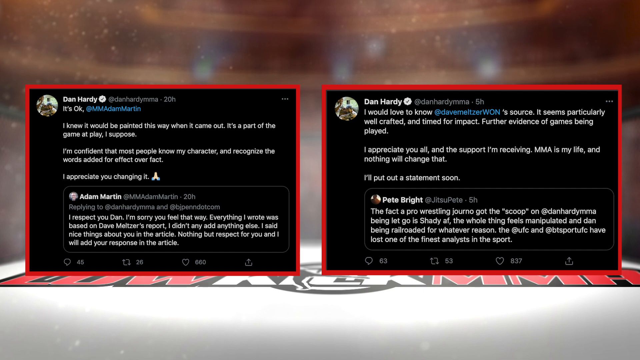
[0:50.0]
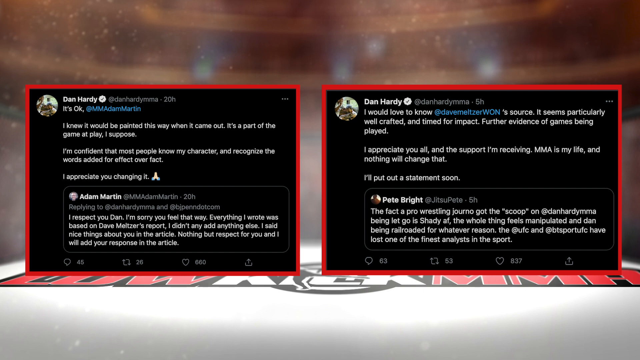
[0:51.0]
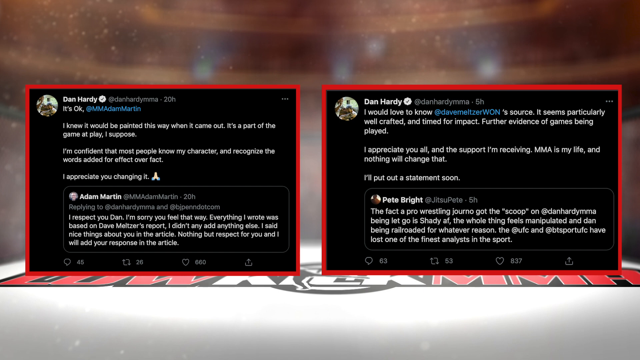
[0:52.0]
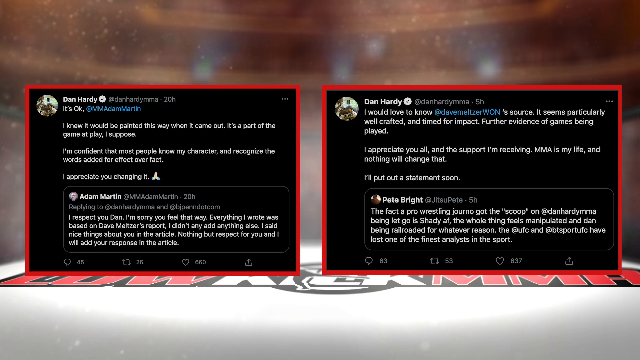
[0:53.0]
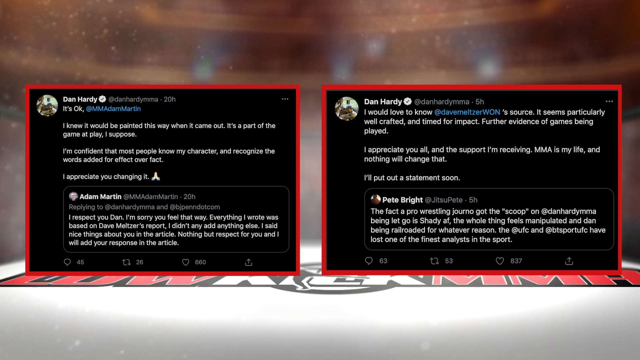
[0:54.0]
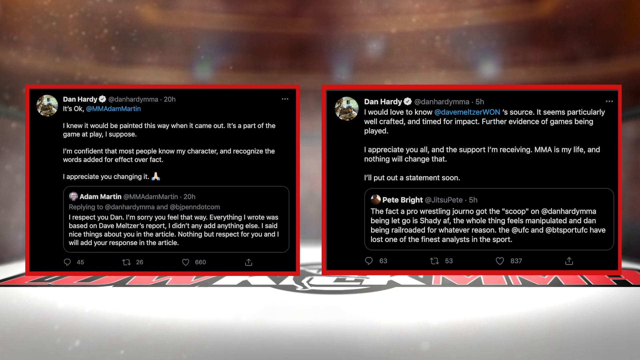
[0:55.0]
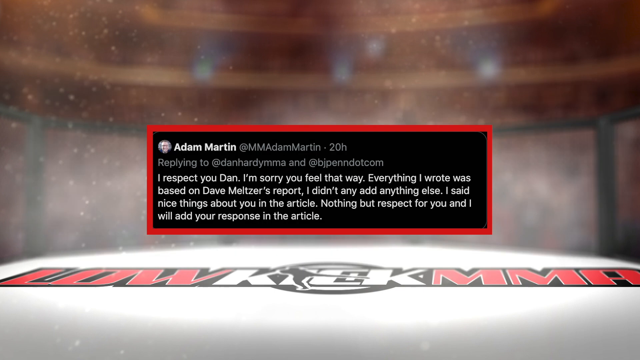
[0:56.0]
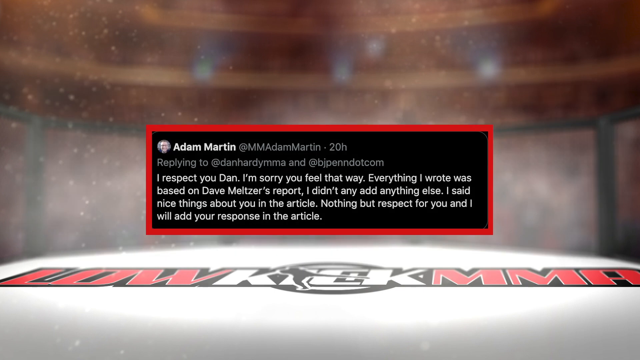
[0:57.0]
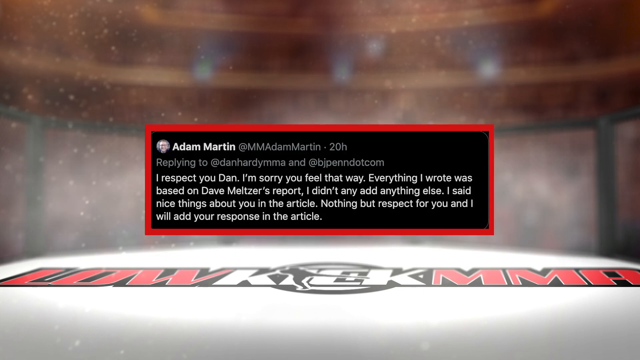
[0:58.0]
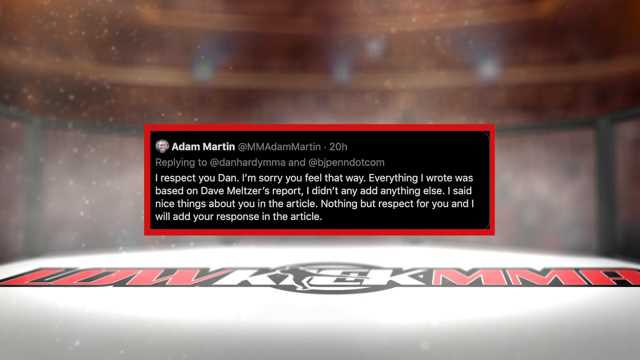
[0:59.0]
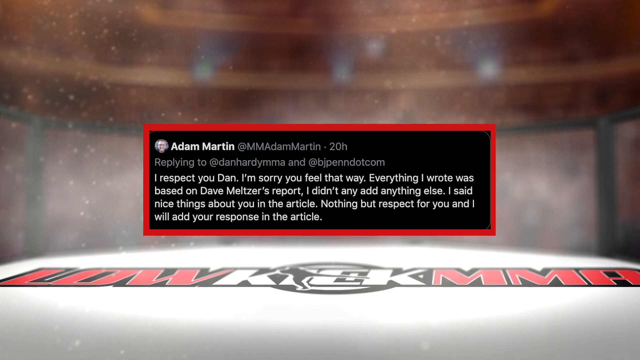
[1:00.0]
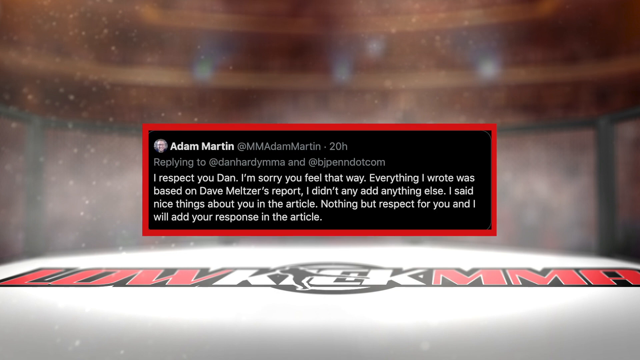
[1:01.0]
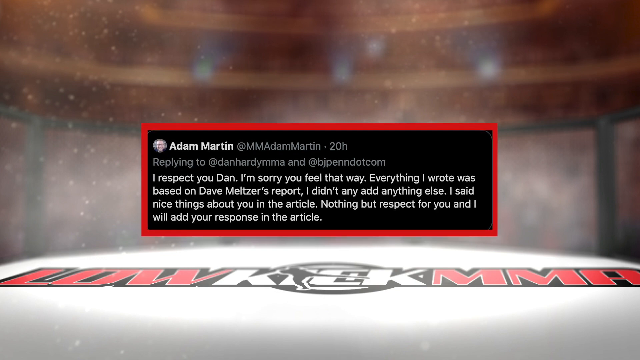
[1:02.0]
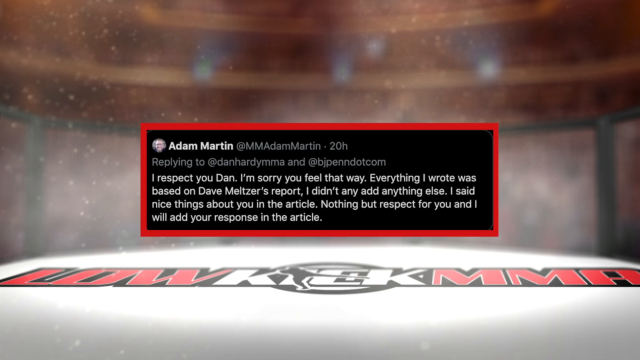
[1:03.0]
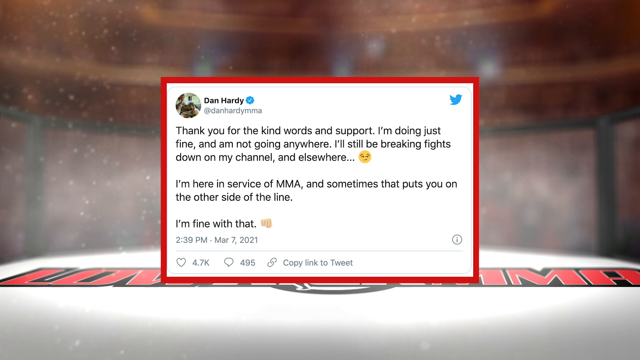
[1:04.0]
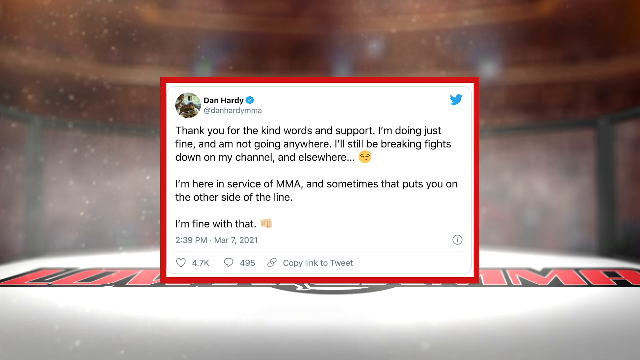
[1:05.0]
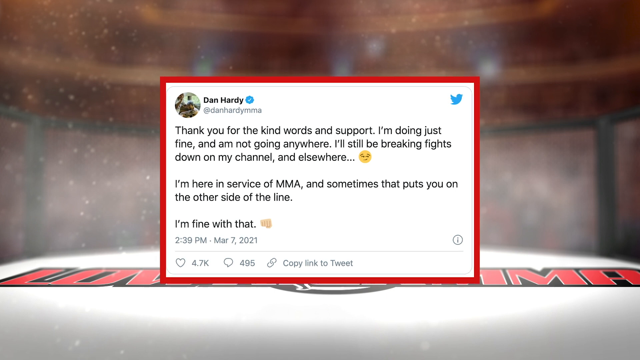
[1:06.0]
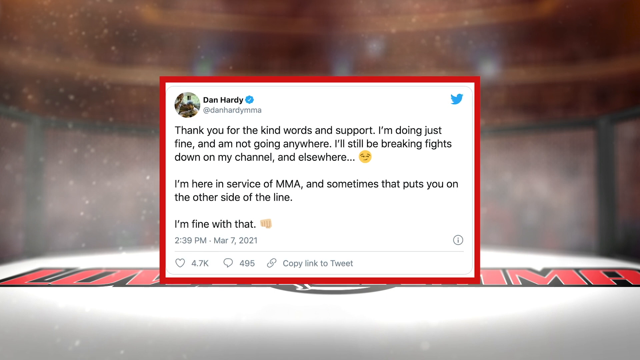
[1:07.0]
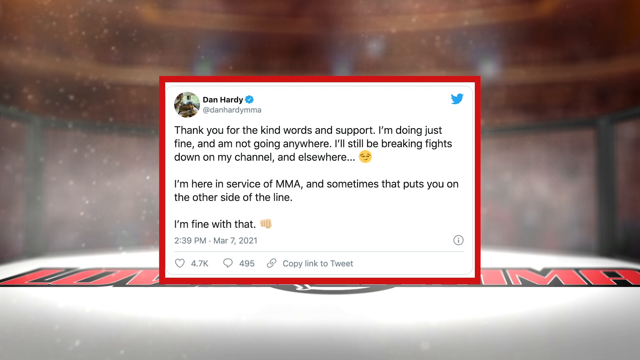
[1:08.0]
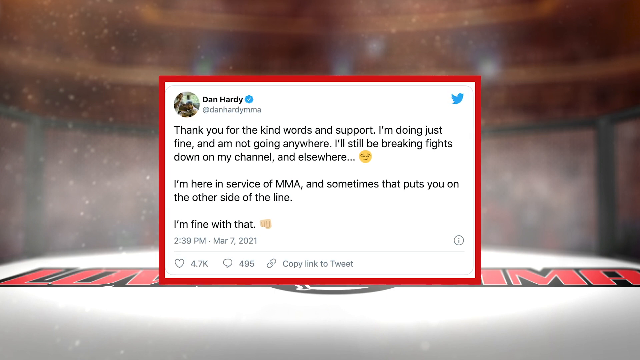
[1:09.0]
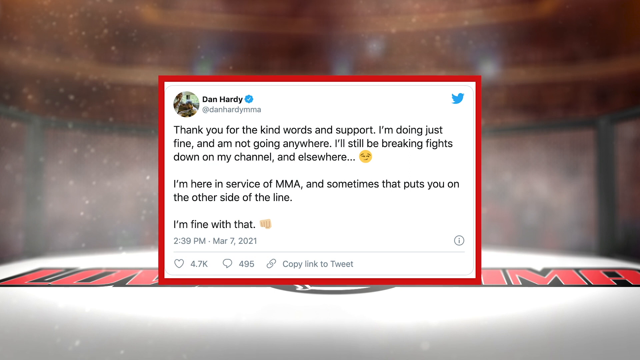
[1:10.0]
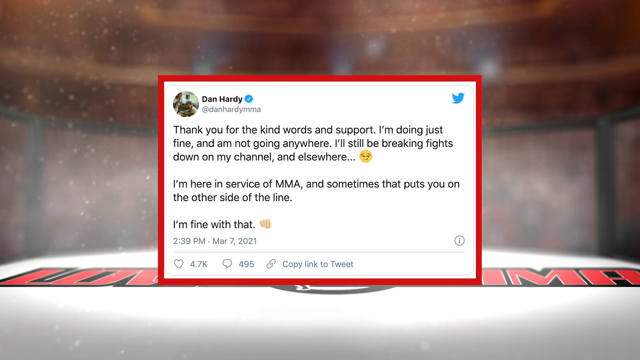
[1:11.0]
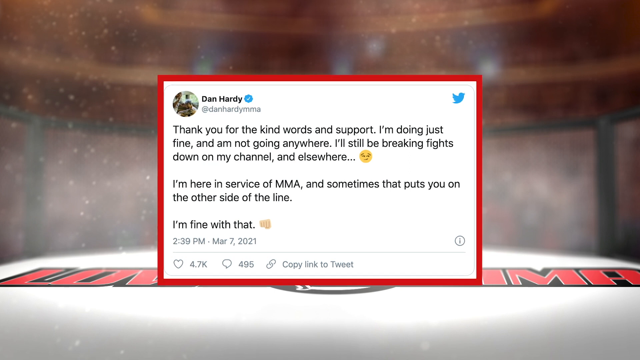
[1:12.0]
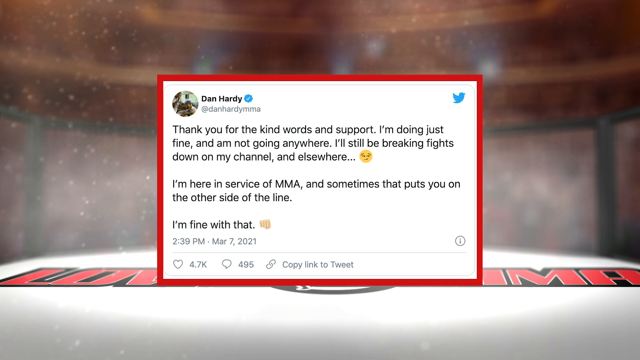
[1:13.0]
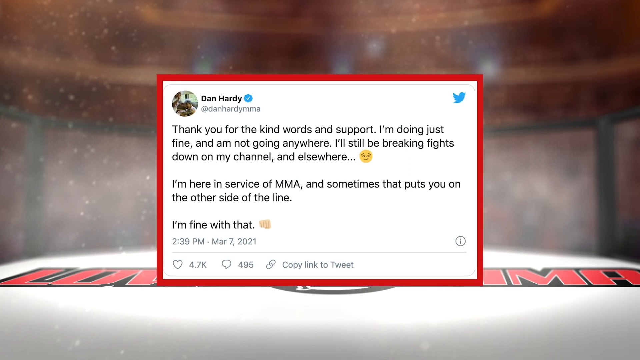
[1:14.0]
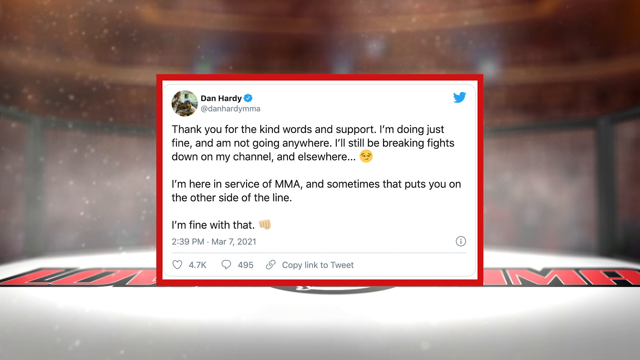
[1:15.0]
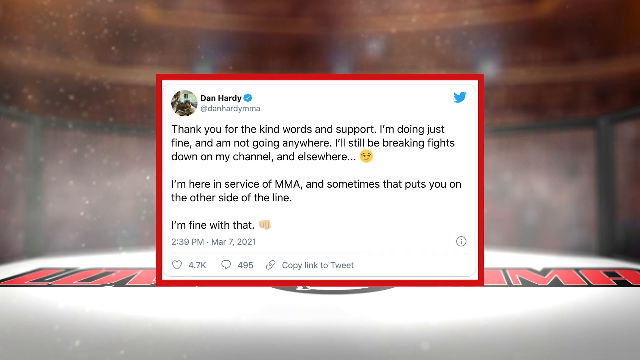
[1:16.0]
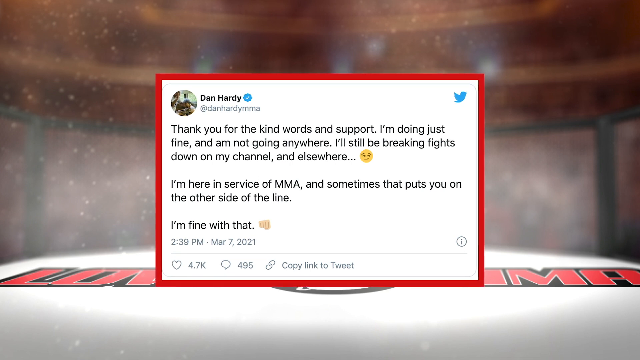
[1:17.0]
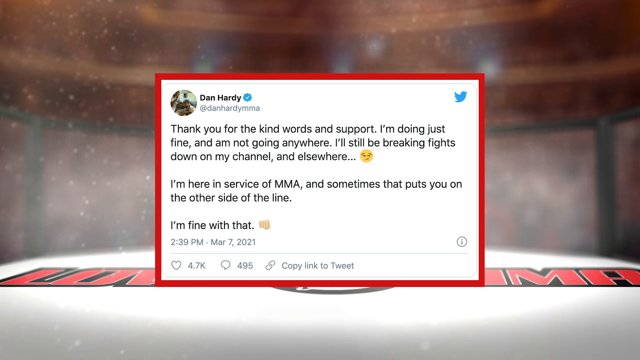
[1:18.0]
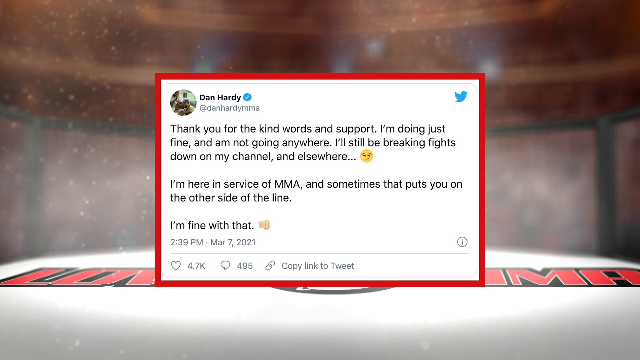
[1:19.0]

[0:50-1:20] Two tweets by Dan Hardy are on screen. The first says "I knew I would be painted this way when it came out. It's a part of the game at play, I suppose. I'm confident that most people know my character and recognize the words added for effect over fact. I appreciate you changing it." The second says "I would love to know where Dave Meltzer got his source. It seems particularly well crafted and timed for impact. Further evidence of games being played. I appreciate you all and the support I'm receiving. MMA is my life and nothing will change that. I'll put out a statement soon." The screen then shows a tweet by Adam Martin that says "I respect you, Dan. I'm sorry you feel that way. Everything I wrote was based on Dave Meltzer's report. I didn't add anything else. I said nice things about you in the article. Nothing but respect for you. And I will add your response in the article." The video cuts to another tweet from Dan Hardy, which says "Thank you for the kind words and support. I'm doing just fine and not going anywhere. I'll still be breaking fights down on my channel and elsewhere. I'm here in service of MMA, and sometimes that puts you on the other side of the line. I'm fine with that."